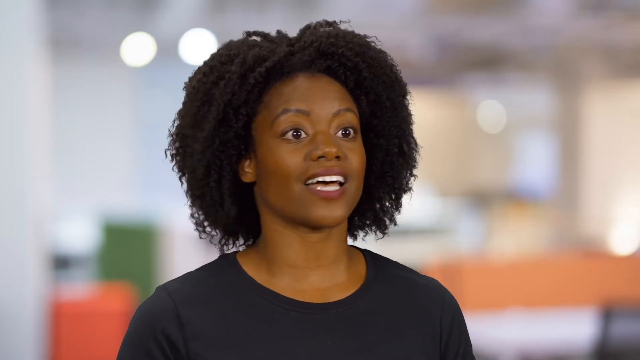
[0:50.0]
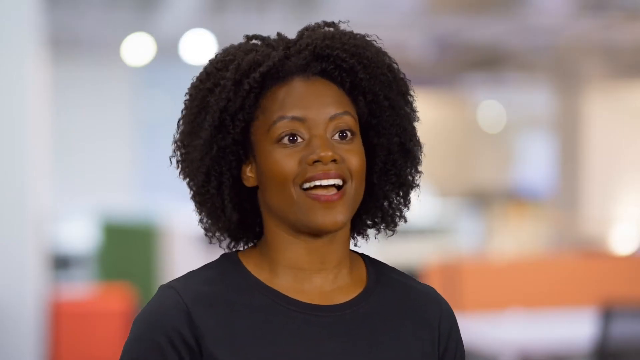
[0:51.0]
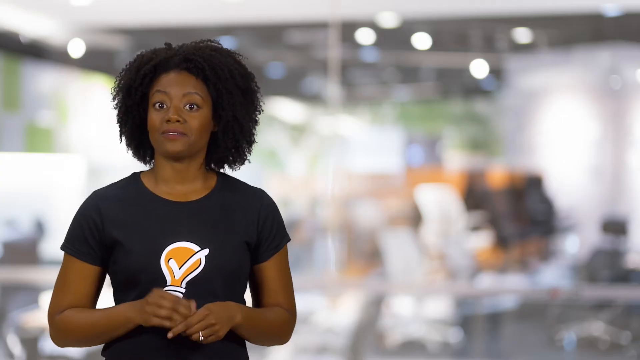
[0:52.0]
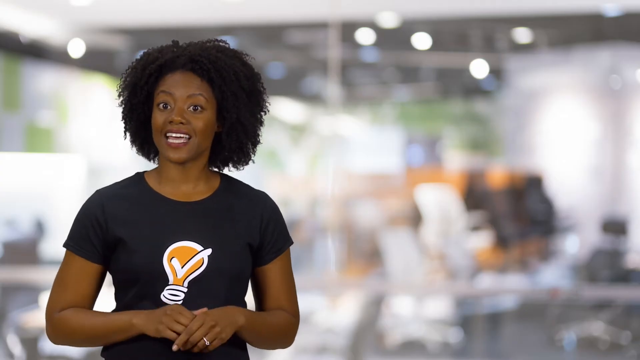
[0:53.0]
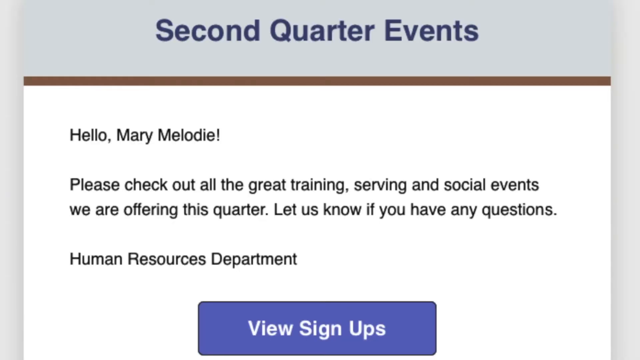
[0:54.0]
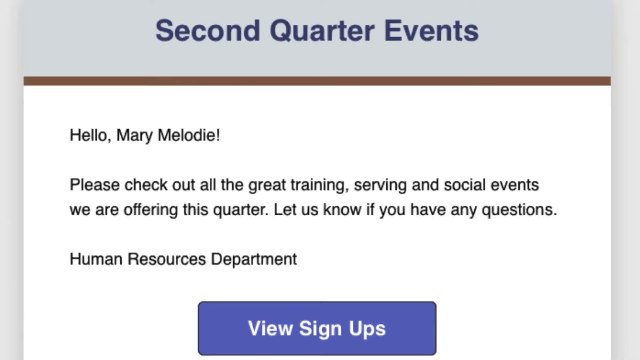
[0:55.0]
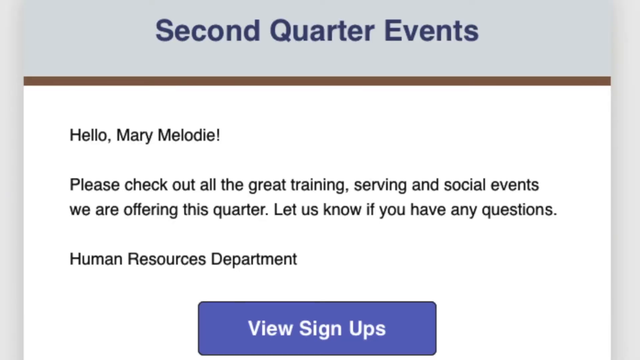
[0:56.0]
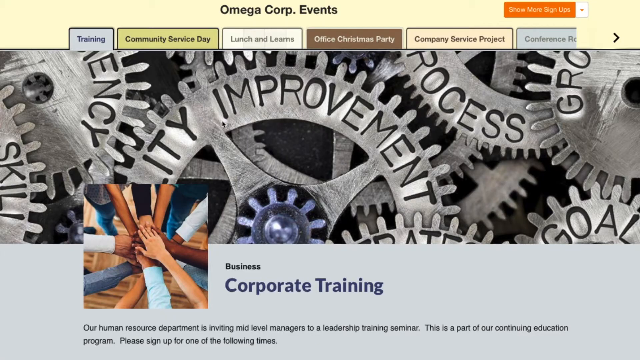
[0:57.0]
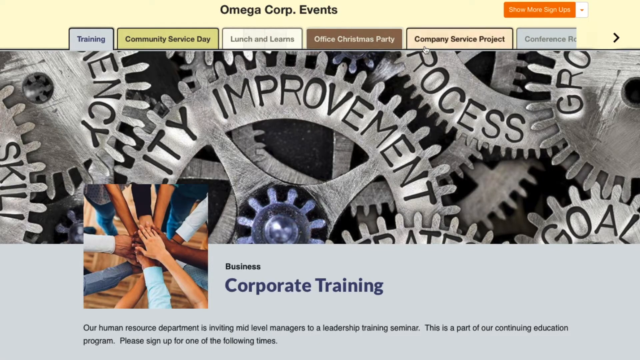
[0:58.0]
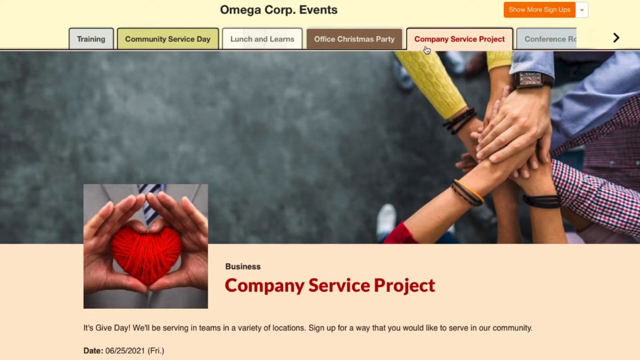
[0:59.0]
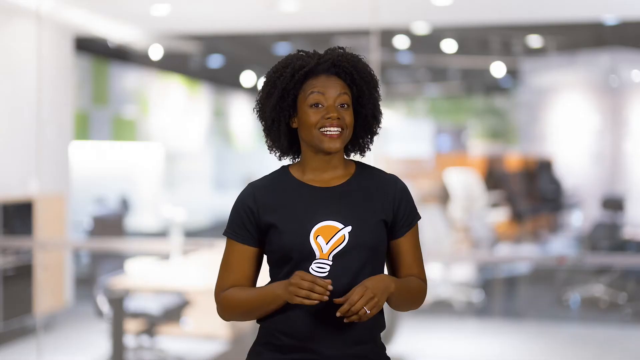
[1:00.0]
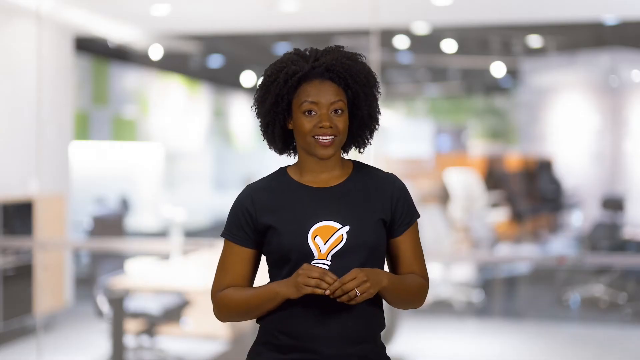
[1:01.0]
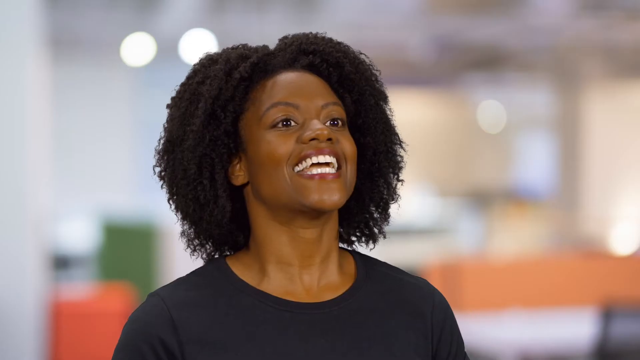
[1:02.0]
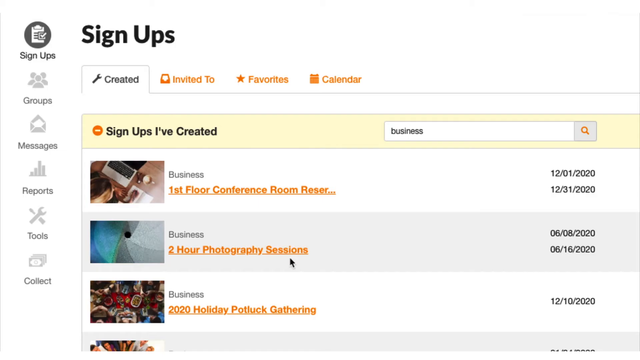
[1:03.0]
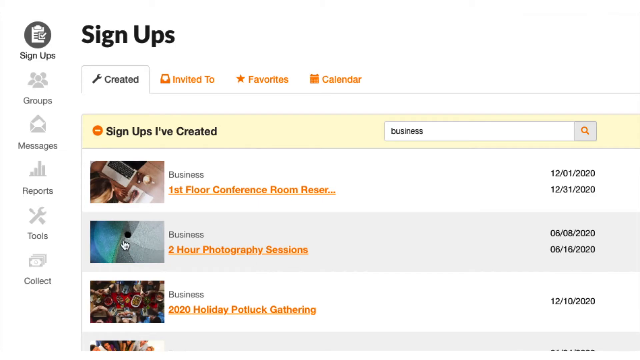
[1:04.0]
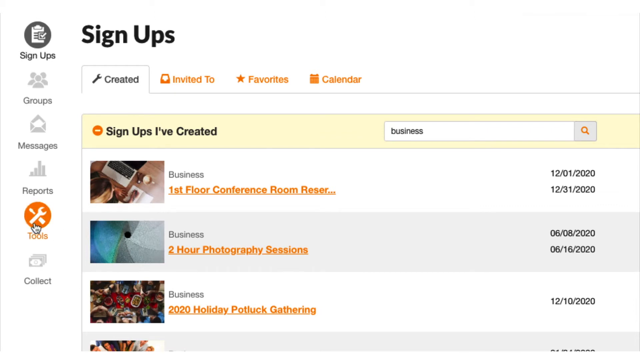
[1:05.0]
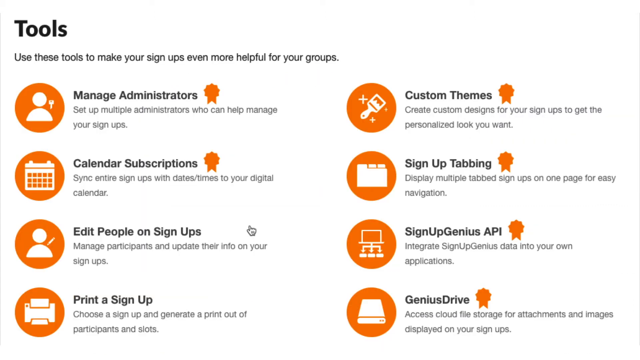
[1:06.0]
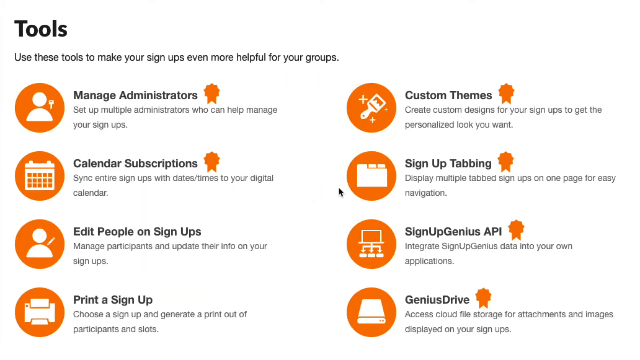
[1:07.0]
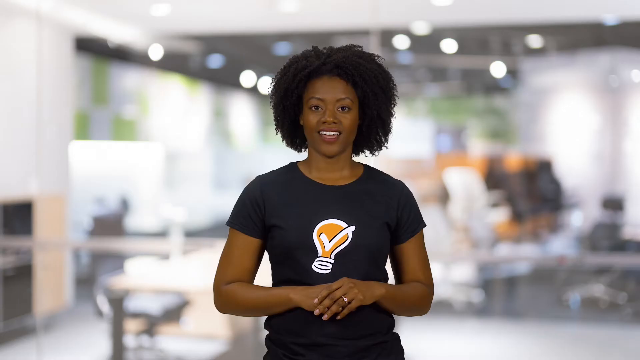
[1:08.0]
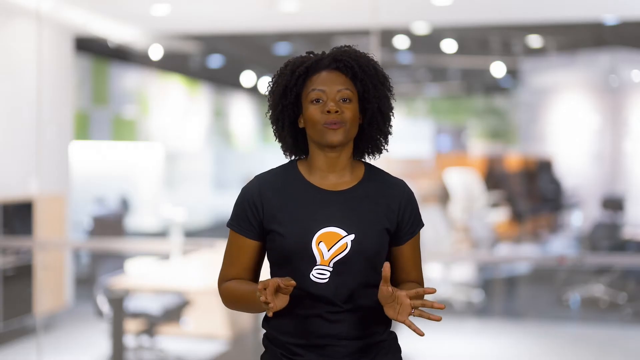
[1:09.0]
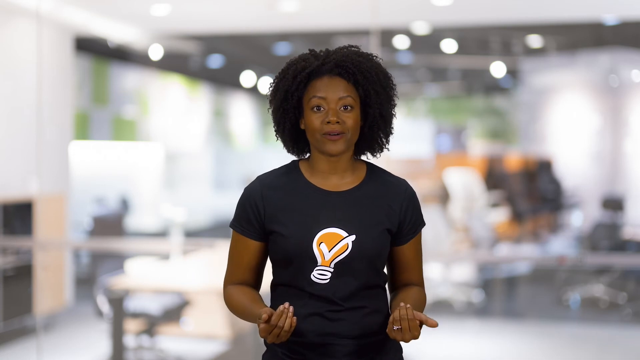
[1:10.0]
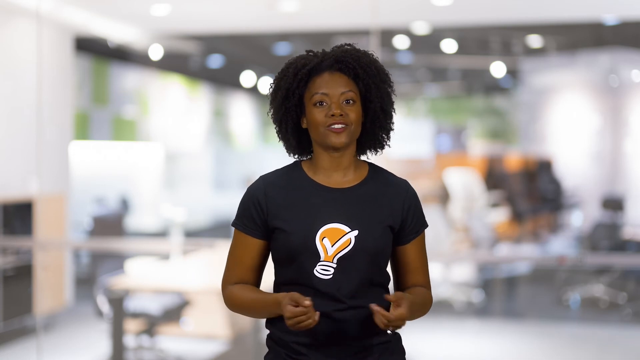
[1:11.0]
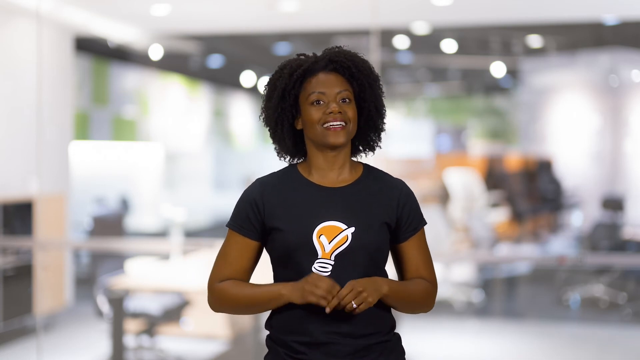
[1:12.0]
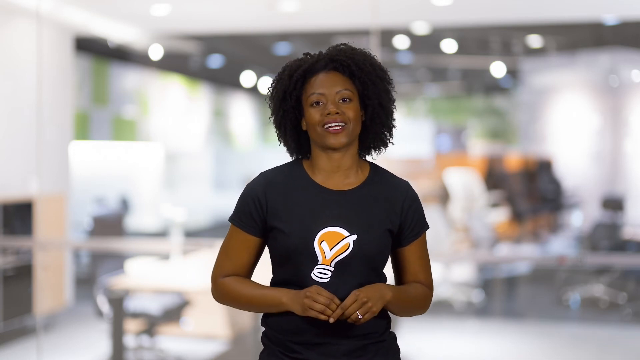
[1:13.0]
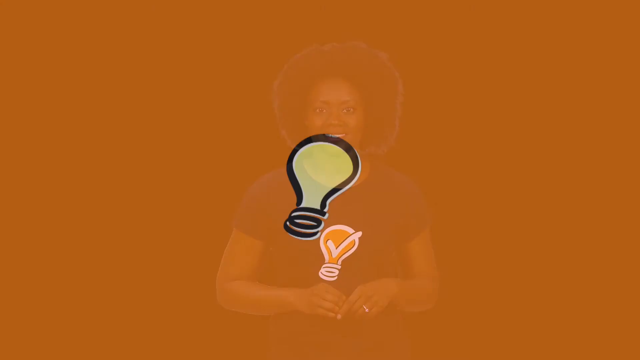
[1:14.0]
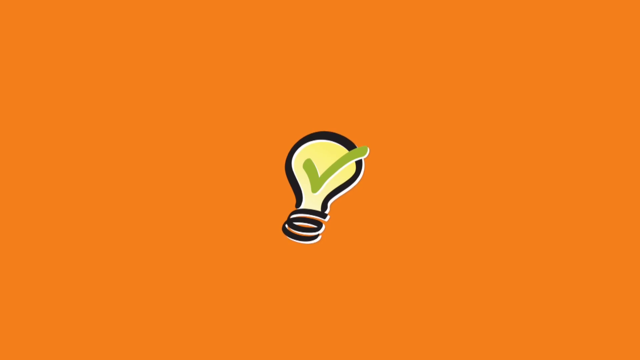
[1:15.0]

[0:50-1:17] A close-up, interview-style shot shows a dark-skinned Black woman in her mid to late 20s speaking directly to the camera with an excited, kind of happy look on her face. She has curly black hair and wears a black t-shirt with a lightbulb logo on it, and she talks energetically, using her hands, for about six seconds. A transition then shows a notice message for second quarter events reading "hello merry melody please check out all the great training serving and social events we offer in this quarter let us know if you have any questions human resources department", with a large "view signups" button underneath. Another transition shows a website's home page titled "omega corp events" at the top, with six category sections shown from left to right, apparently training, community service day, lunch and learns, office christmas party, company service project and conference reports. The user clicks on the company service project tab, and the tab's background changes. The video then transitions to the same Black spokeswoman talking energetically to the camera once again, her eyes open wide and a very intense look on her face.